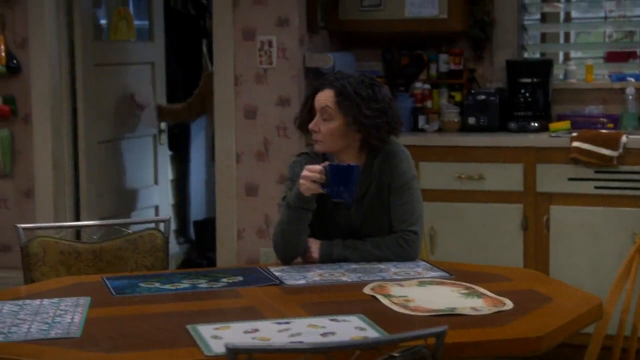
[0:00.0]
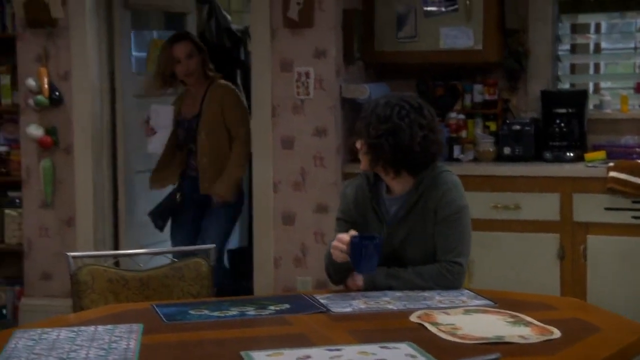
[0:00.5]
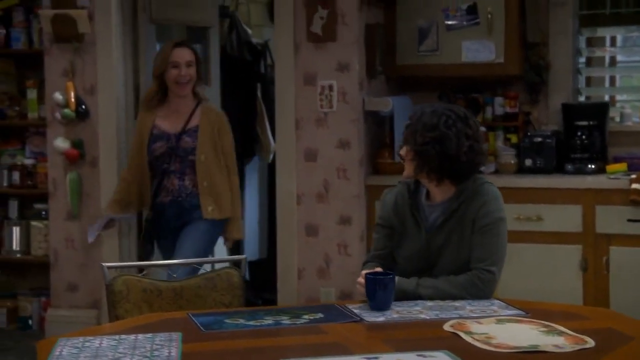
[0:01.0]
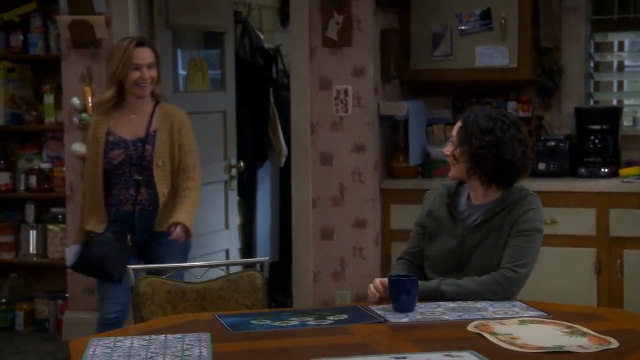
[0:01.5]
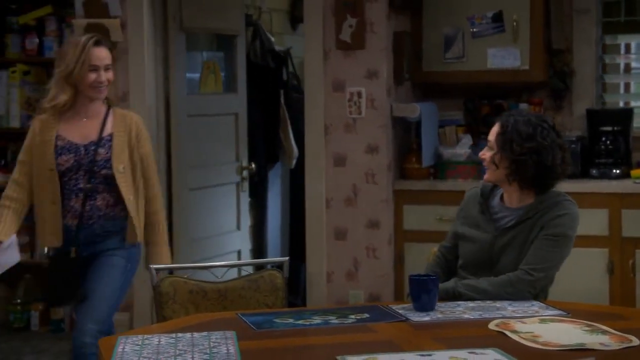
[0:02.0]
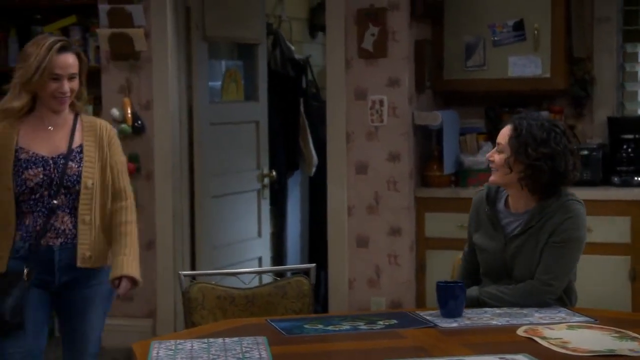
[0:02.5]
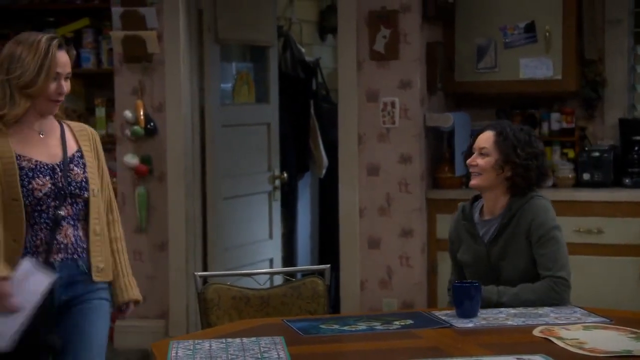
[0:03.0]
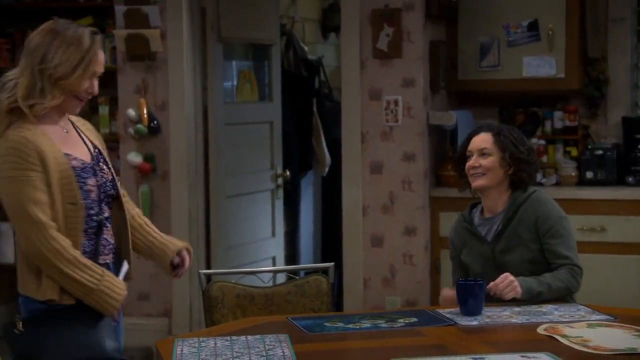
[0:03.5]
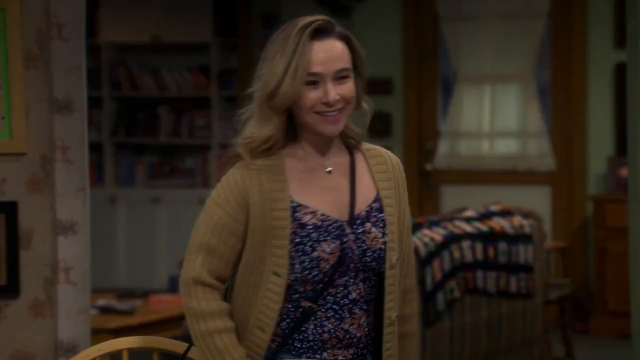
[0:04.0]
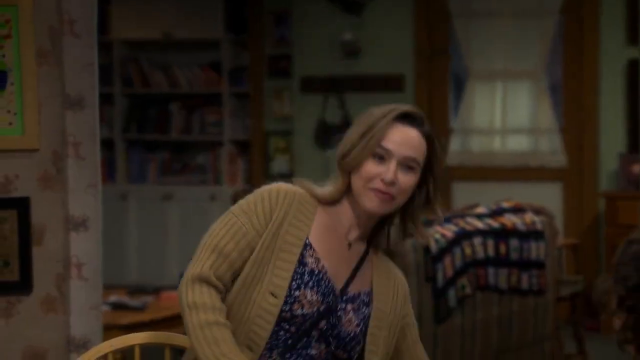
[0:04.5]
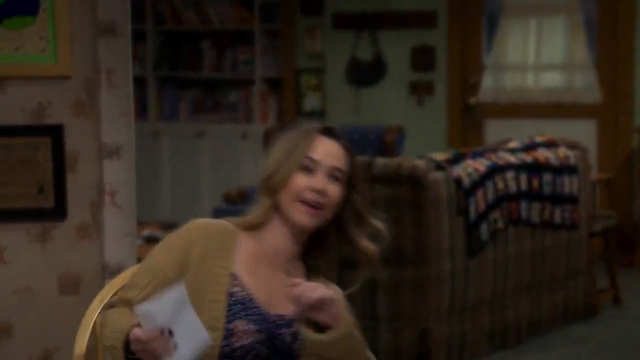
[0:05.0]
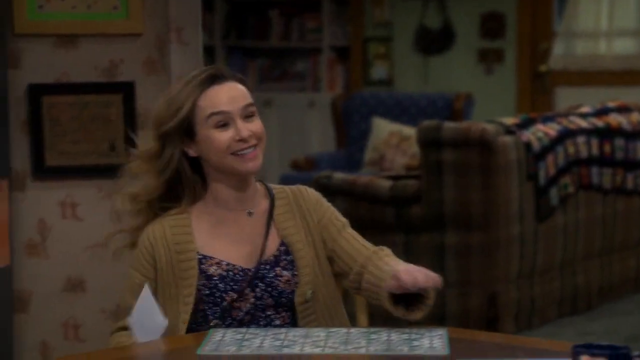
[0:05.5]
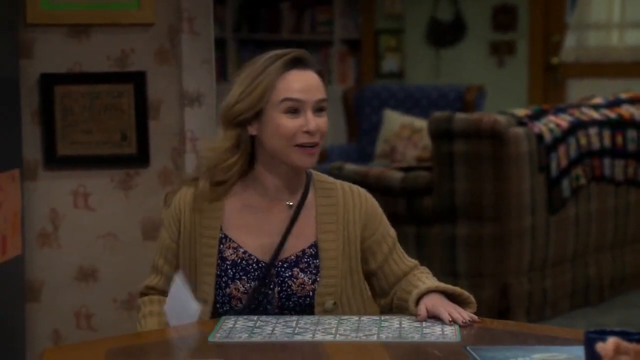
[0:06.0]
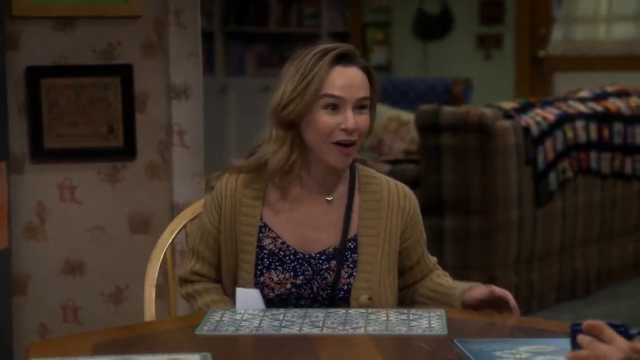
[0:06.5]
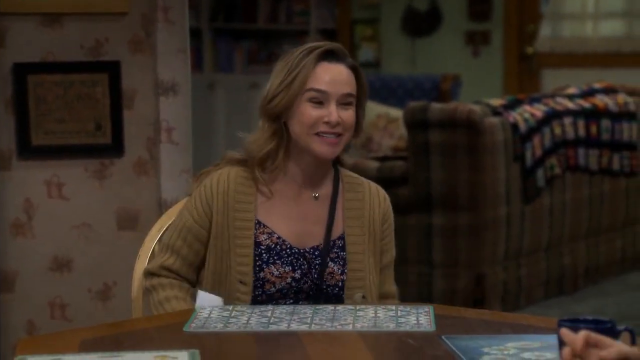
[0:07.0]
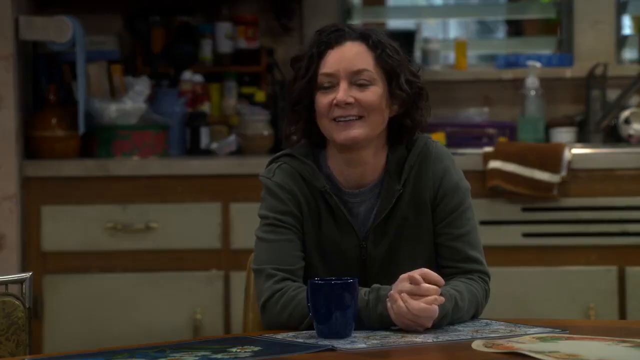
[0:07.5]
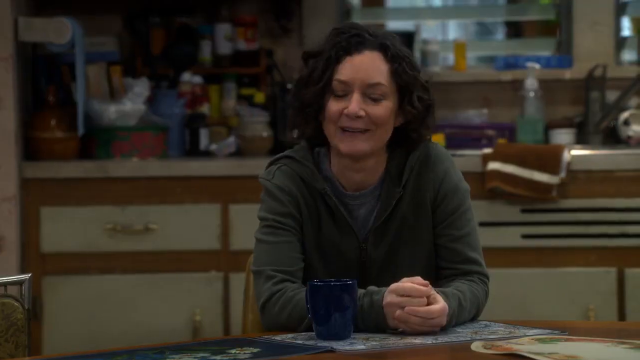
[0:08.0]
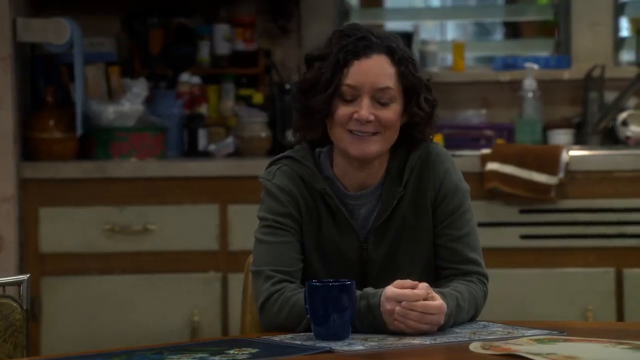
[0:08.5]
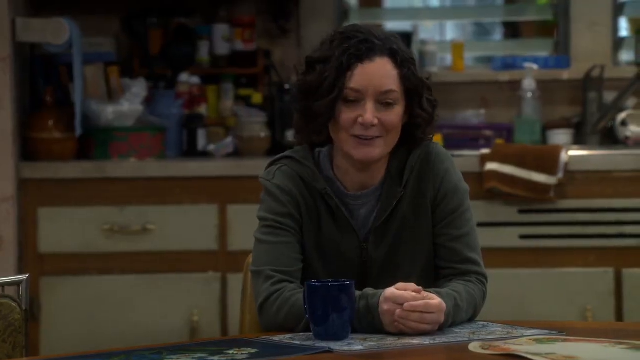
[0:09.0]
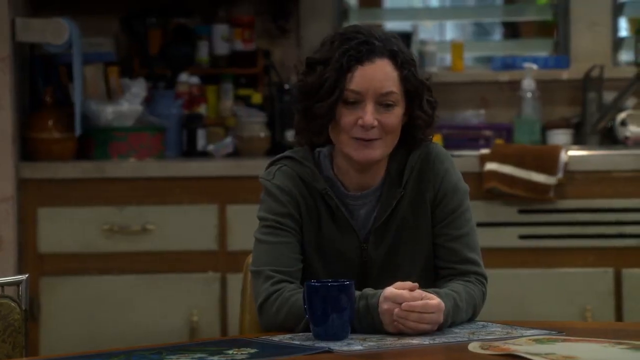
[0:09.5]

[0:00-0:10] A woman with dark hair, wearing a dark olive t-shirt, is seated in a kitchen with her hand resting on the kitchen table. Behind her, lots of kitchenware is on the slab. Another woman walks in through the kitchen door, all smiles, while the seated woman looks at her. The woman who walks in has light brown hair and wears a light brown jacket with a multicolored vest underneath, and she has a messenger bag slung around her neck. She sits at the kitchen table and has a conversation with the woman in the dark olive shirt; they are both excited to see one another. The woman in the light brown jacket has an envelope in her hand.